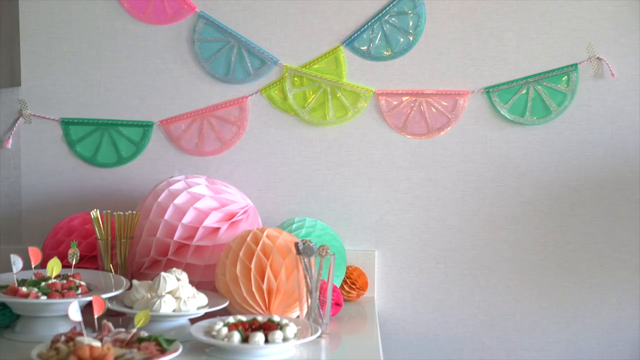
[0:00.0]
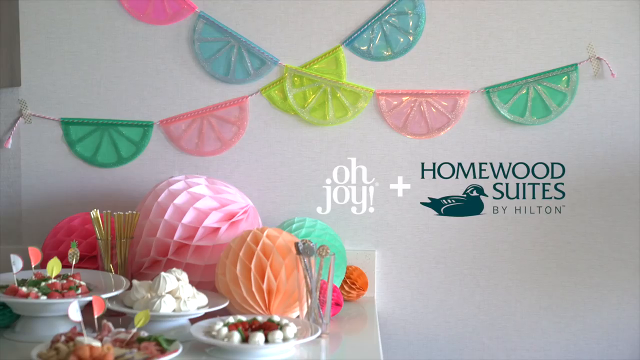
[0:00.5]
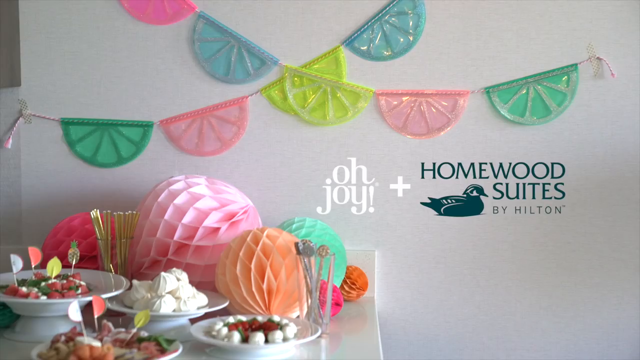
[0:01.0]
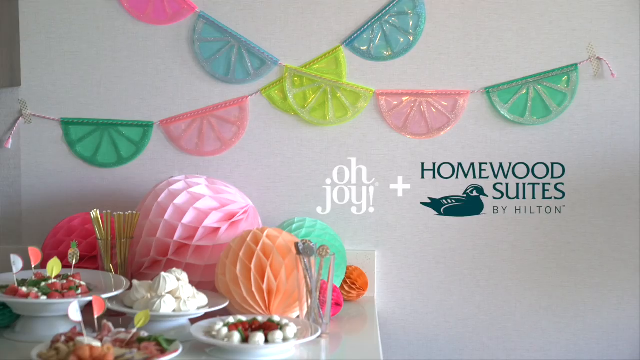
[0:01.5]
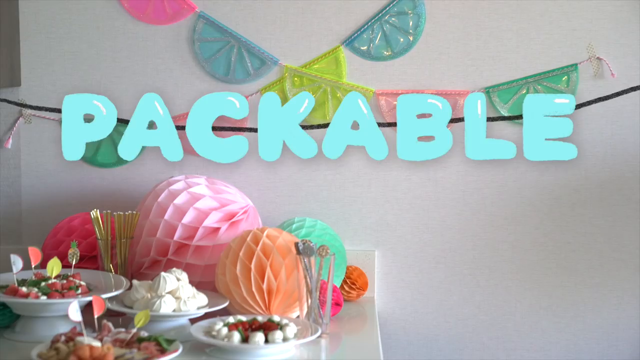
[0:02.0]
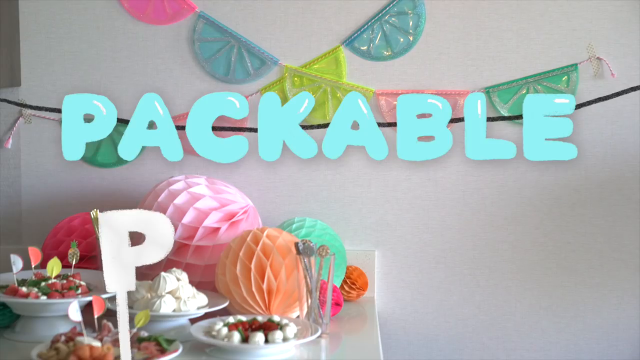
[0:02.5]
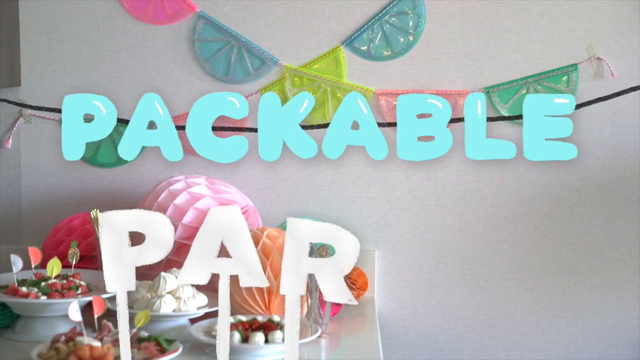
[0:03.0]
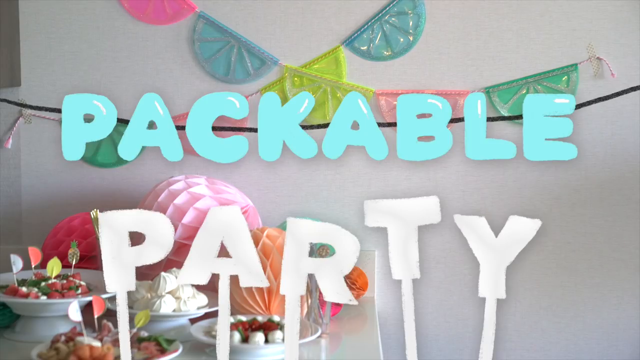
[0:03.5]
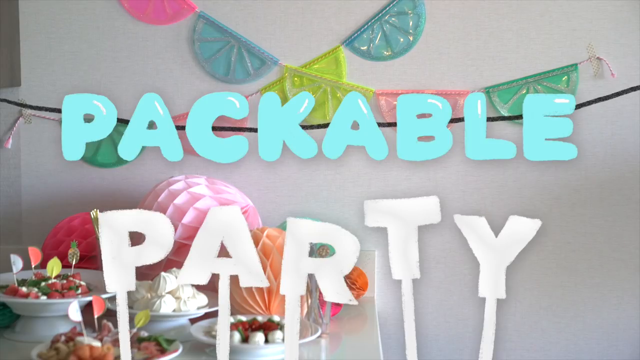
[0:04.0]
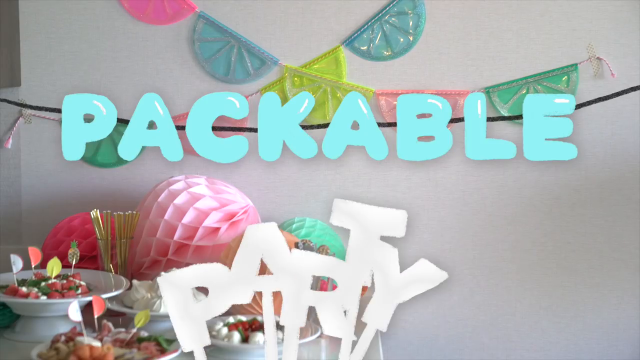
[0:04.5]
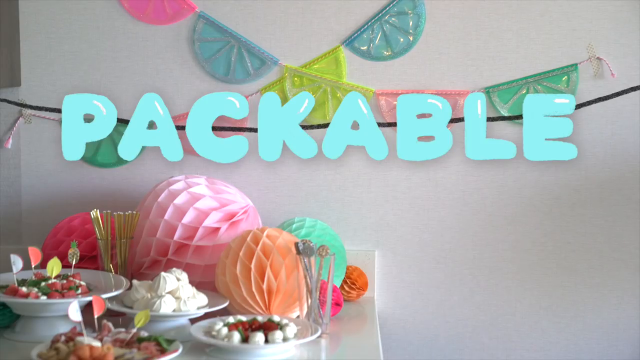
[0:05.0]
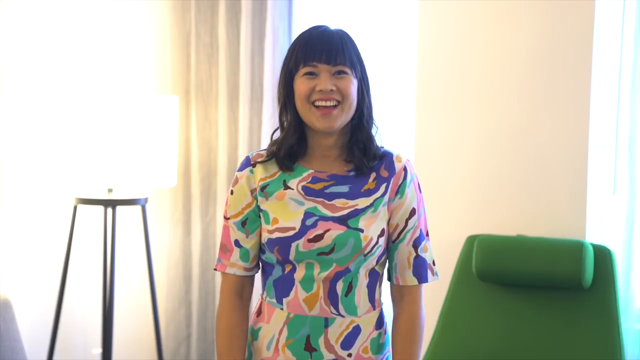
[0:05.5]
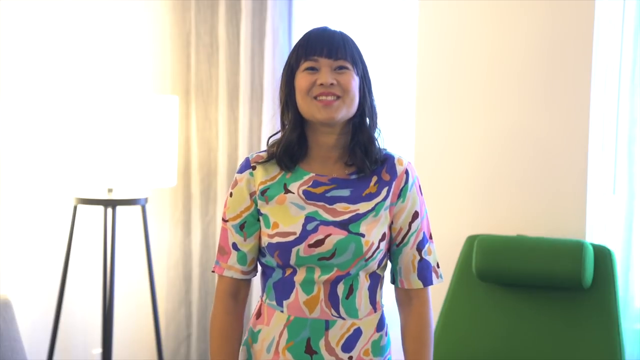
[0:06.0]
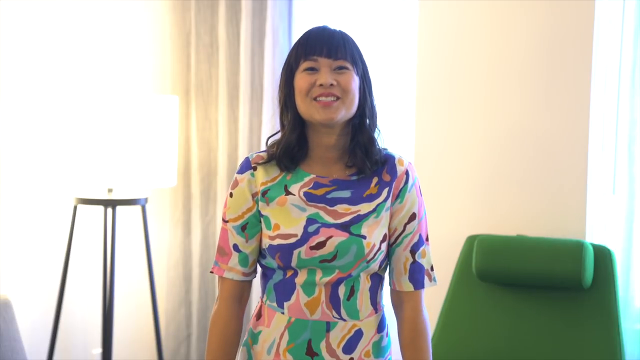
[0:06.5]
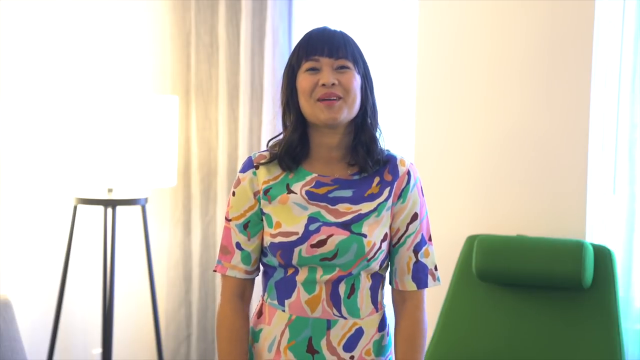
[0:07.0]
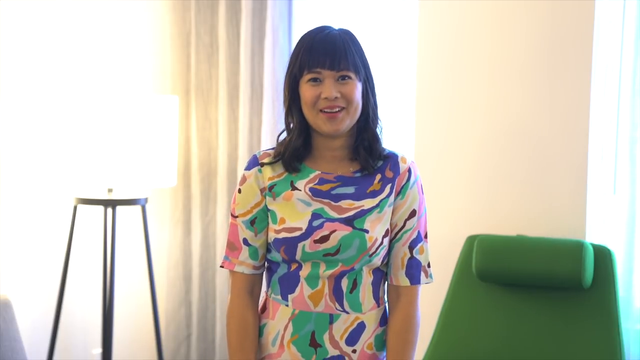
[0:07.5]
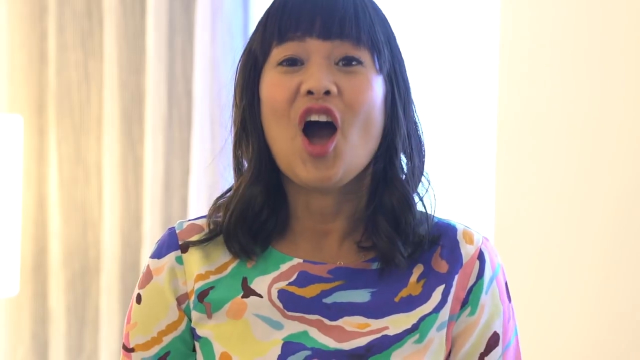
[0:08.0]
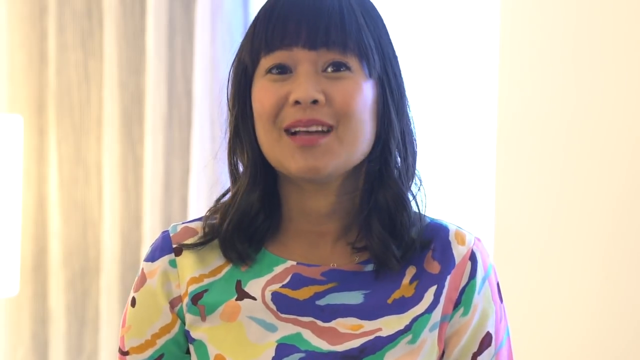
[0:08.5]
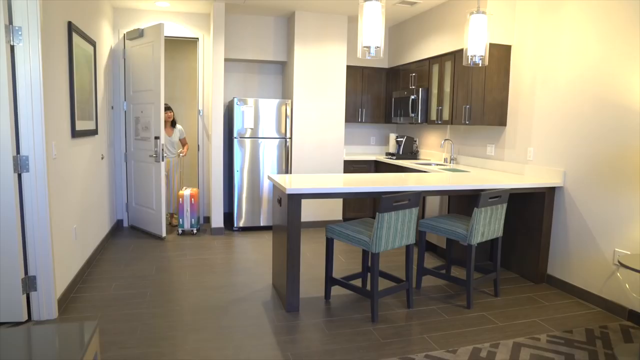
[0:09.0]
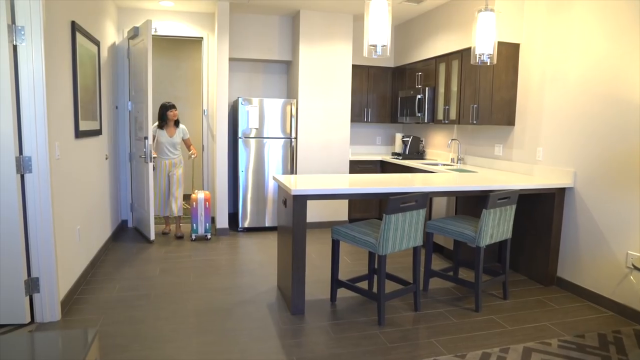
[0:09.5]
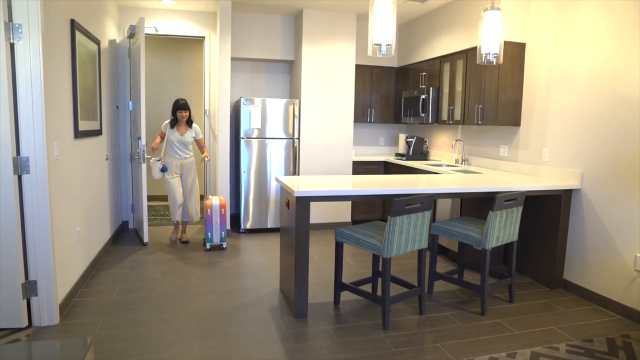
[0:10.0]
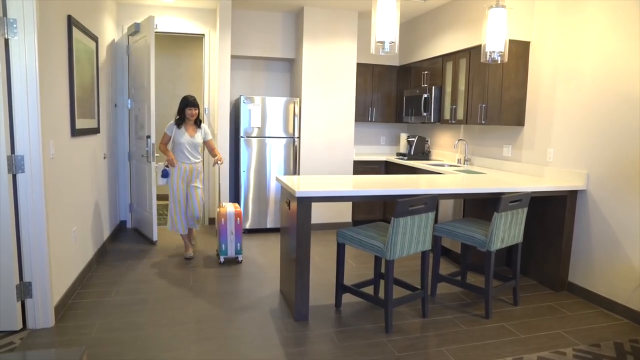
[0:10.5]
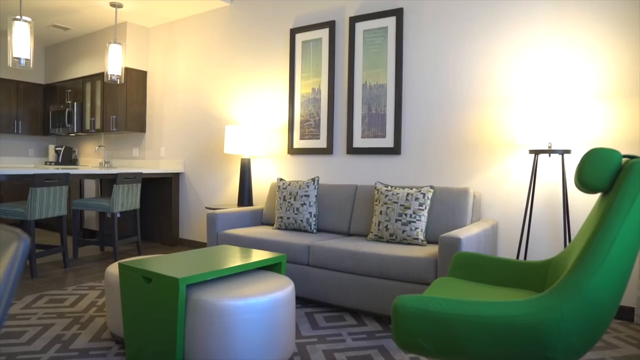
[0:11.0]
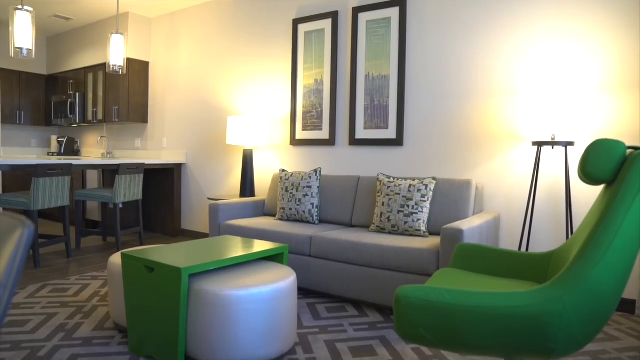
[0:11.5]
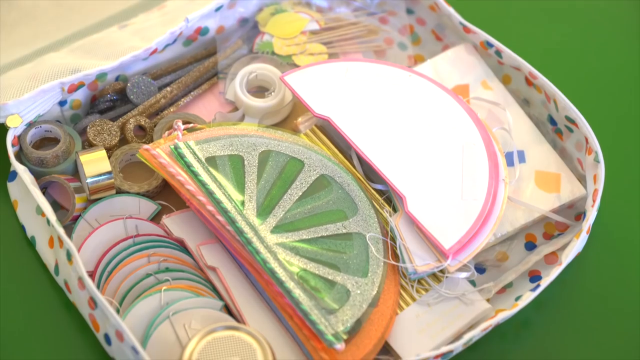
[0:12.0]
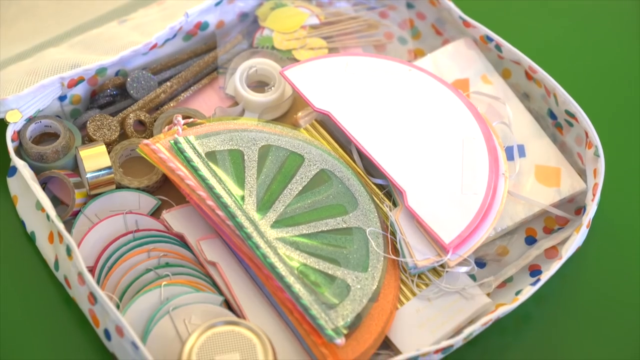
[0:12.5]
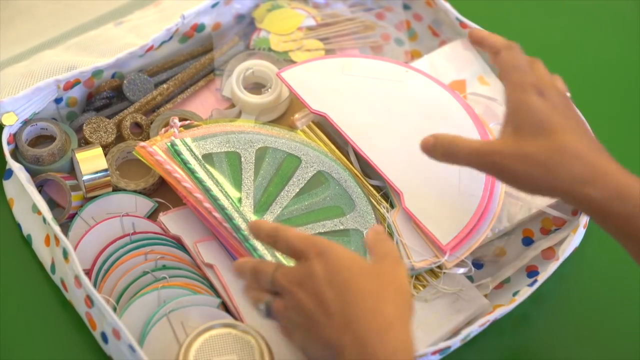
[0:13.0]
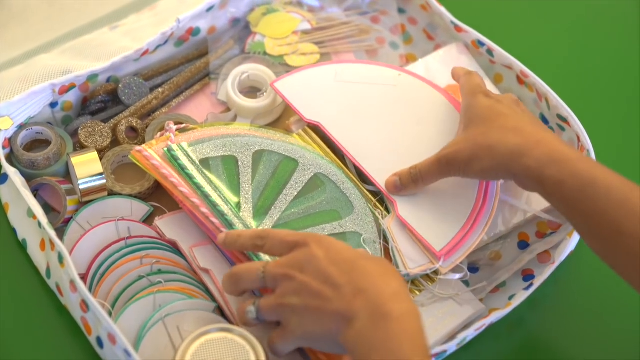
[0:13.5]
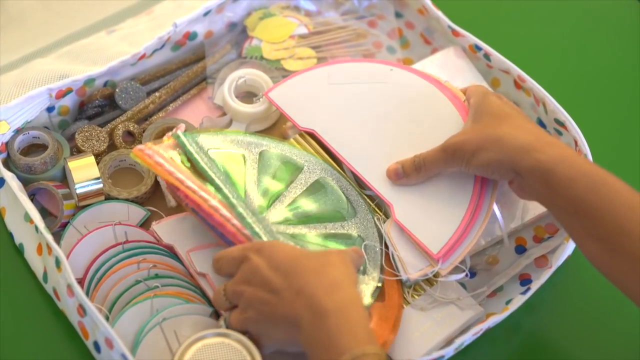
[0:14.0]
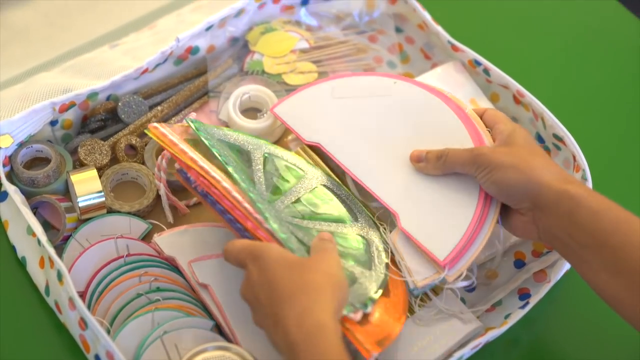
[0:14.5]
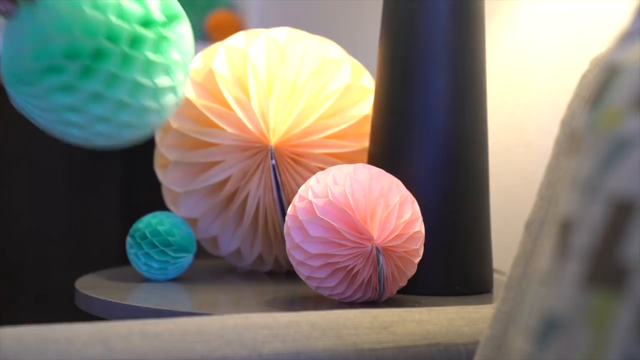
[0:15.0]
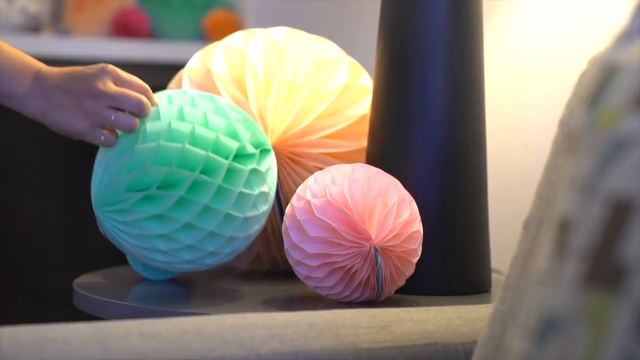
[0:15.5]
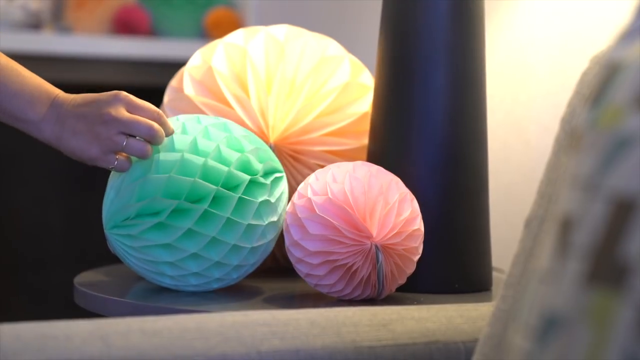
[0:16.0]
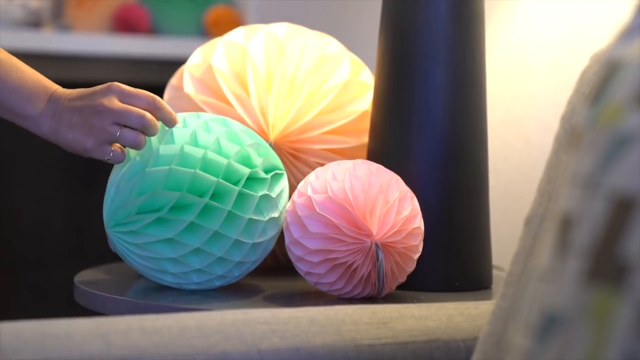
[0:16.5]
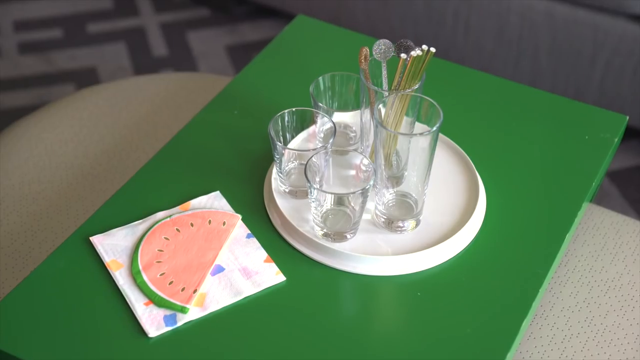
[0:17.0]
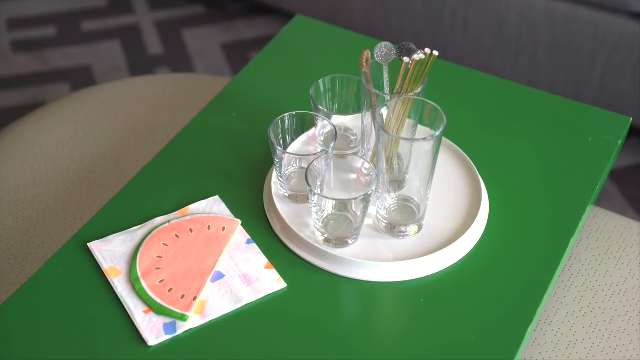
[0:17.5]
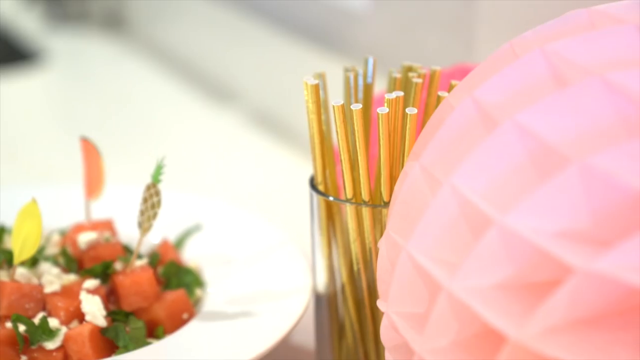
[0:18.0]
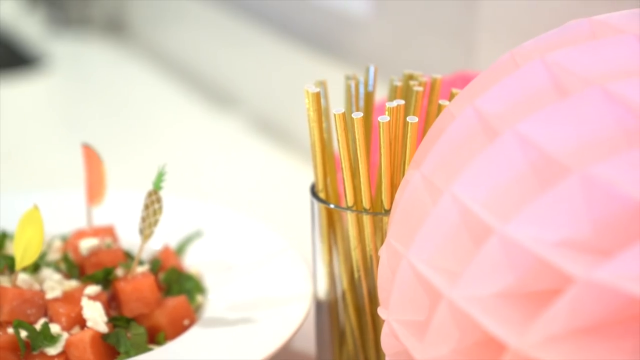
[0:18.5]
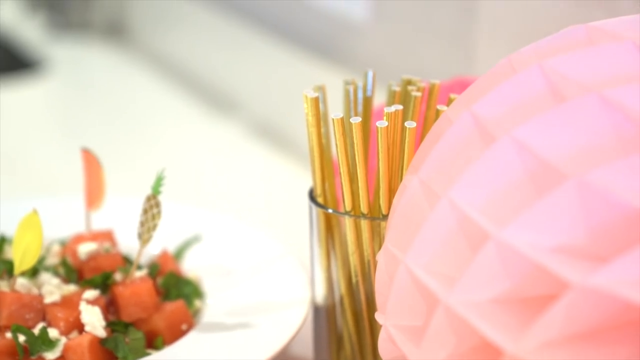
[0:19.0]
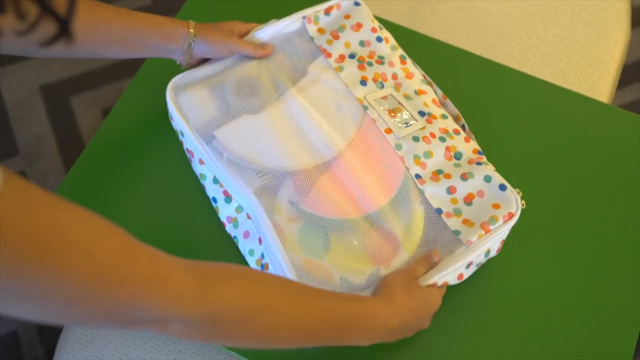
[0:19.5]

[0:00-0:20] The shot holds on what looks to be a table with bright colored decorations on it, apparently both paper and plastic decorations, in many pastel or spring colors: lots of pinks, oranges, light blues and light greens. Text reading "oh joy" appears along with text ending in "by Hilton", followed by text reading "packable party" in bubbly blue and white lettering. The video then transitions to a woman speaking to the camera. She looks to be of Asian descent, smiles as she speaks, and has black hair that goes down to her shoulders. She wears a dress that looks tie-dye, with a lot of different colors and patterns on it. She looks to be in the back of a hotel room as she speaks. Next comes a shot of her coming into a room of some sort with a suitcase, followed by shots of the room and of the paper decorations seen earlier being used, all pastel colored. Cups, bowls, fruits and similar items are also being put out.